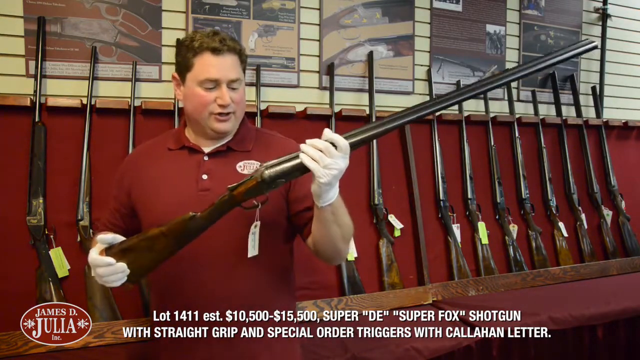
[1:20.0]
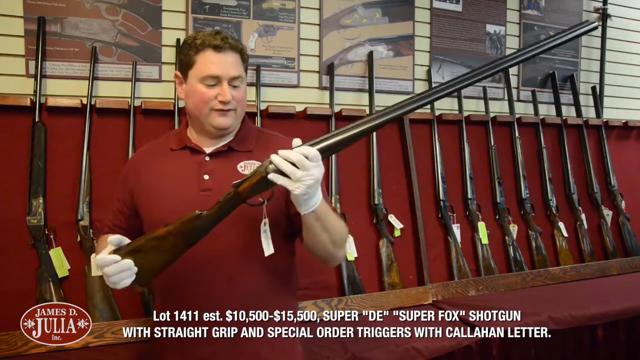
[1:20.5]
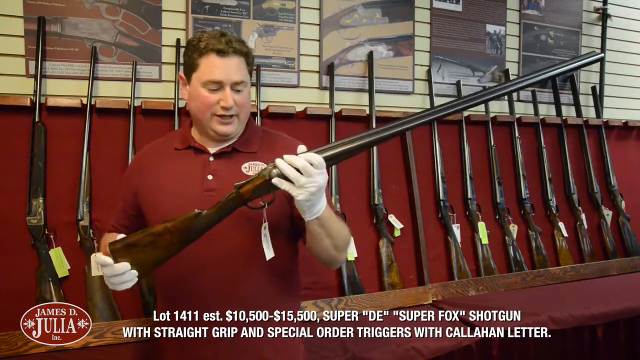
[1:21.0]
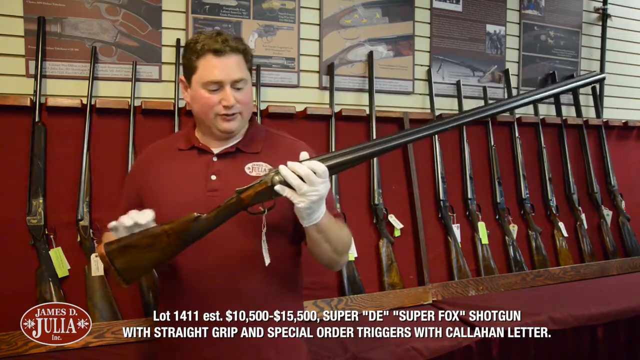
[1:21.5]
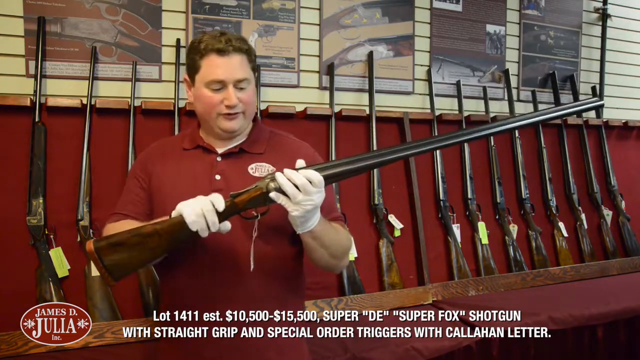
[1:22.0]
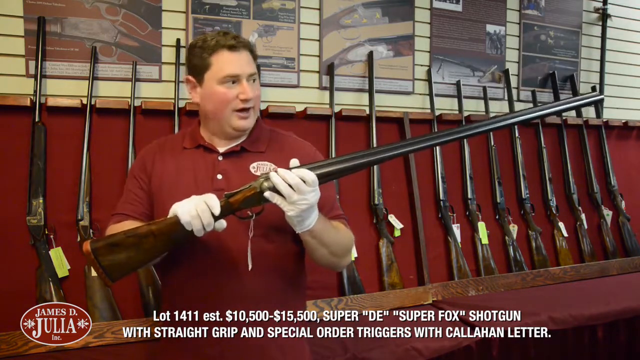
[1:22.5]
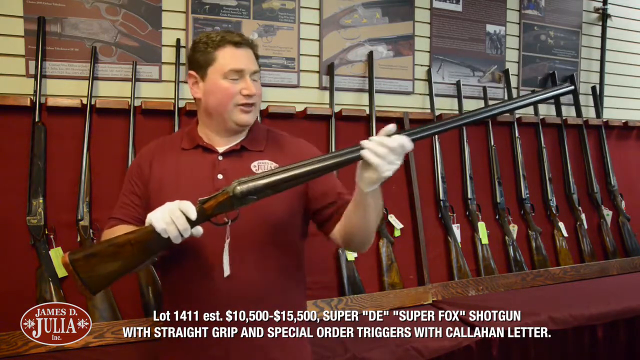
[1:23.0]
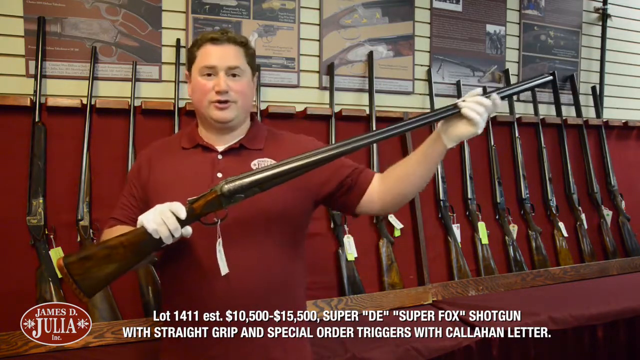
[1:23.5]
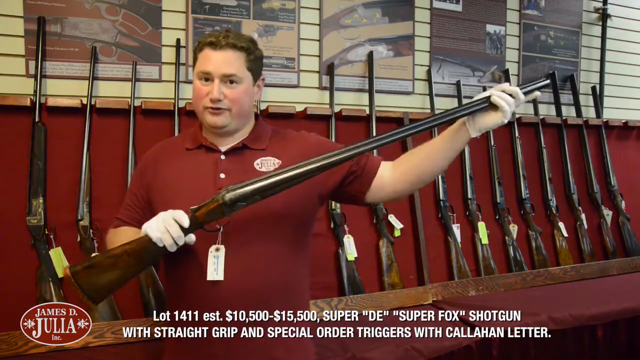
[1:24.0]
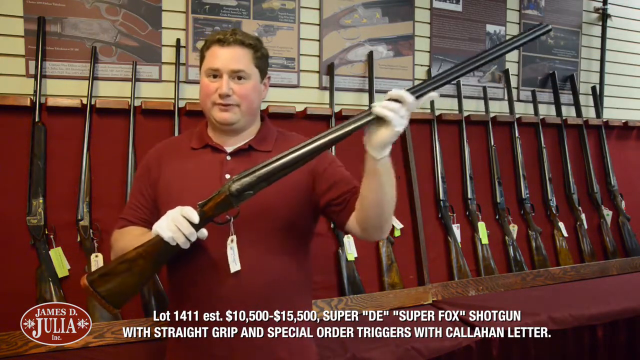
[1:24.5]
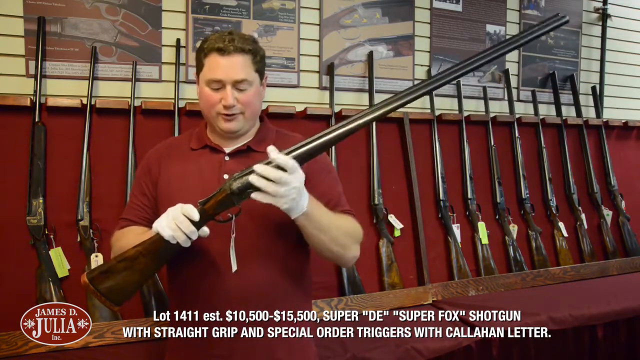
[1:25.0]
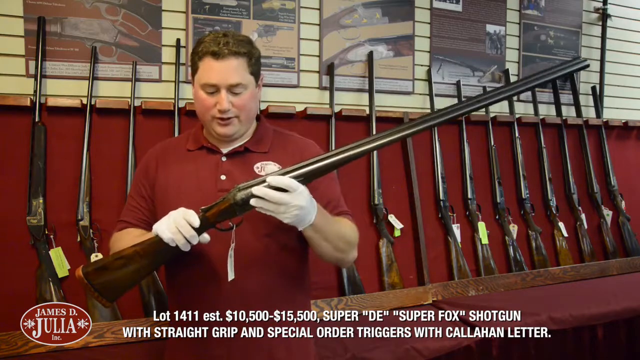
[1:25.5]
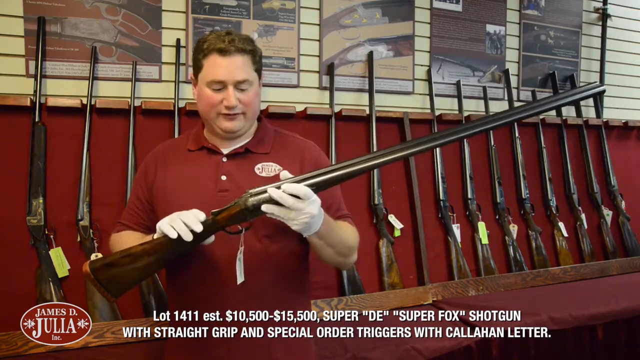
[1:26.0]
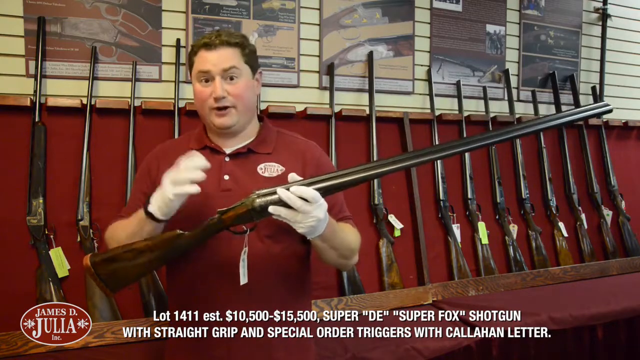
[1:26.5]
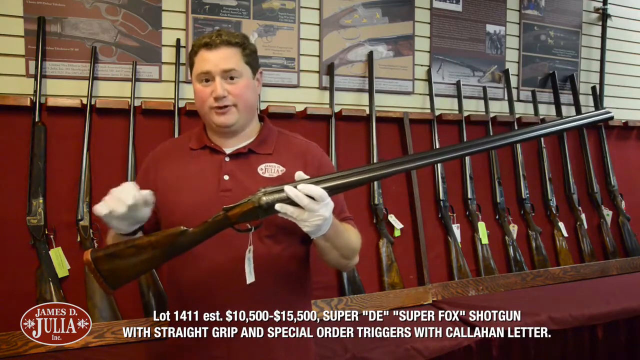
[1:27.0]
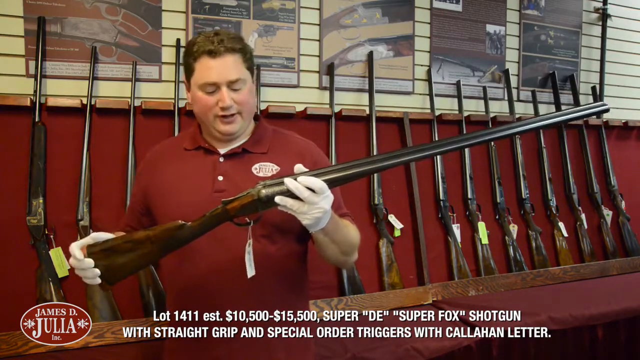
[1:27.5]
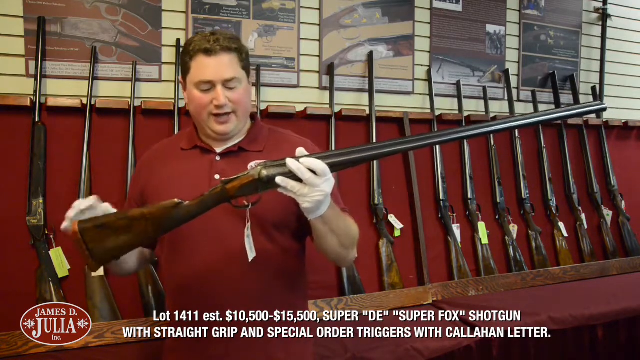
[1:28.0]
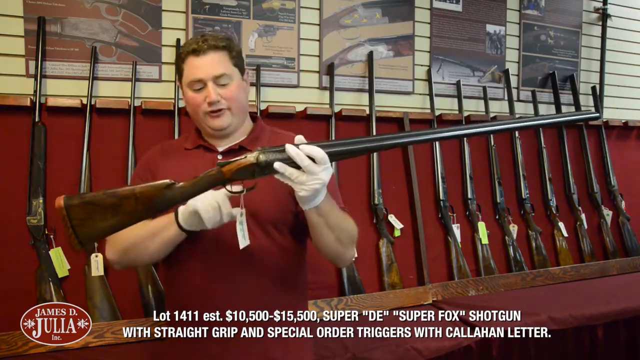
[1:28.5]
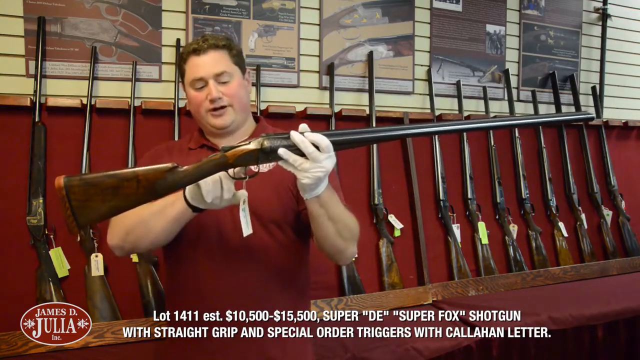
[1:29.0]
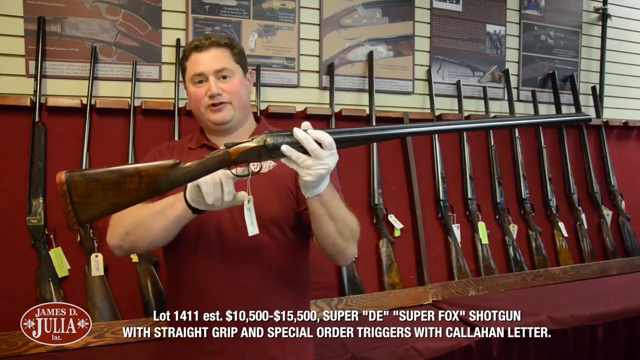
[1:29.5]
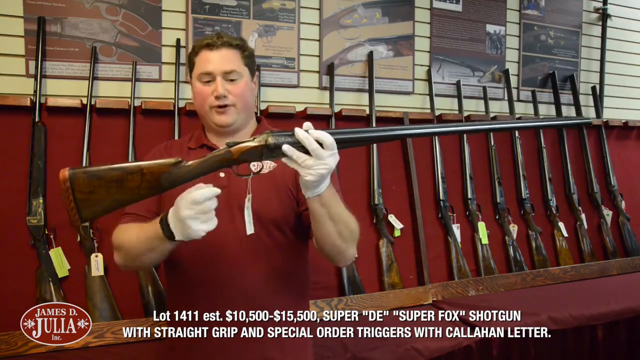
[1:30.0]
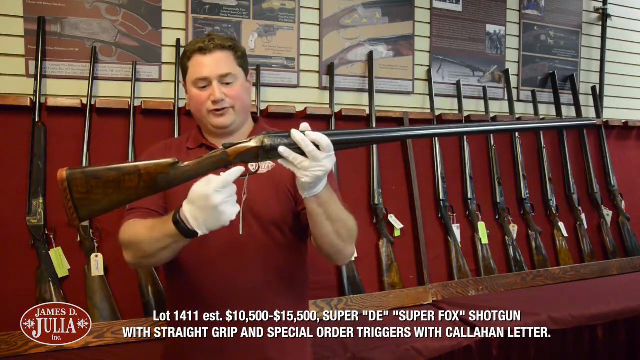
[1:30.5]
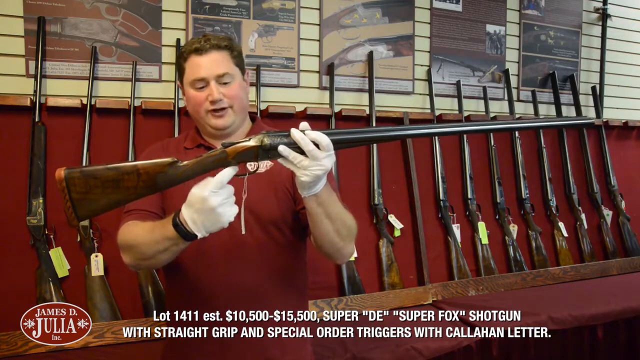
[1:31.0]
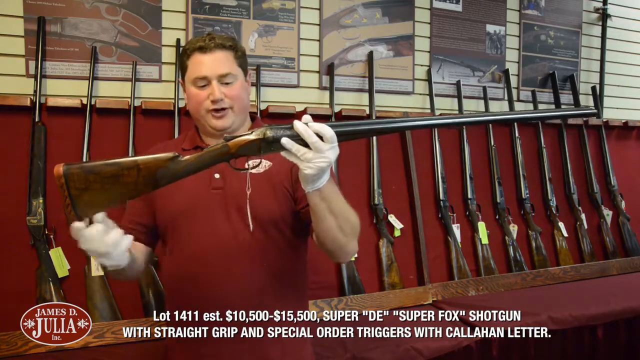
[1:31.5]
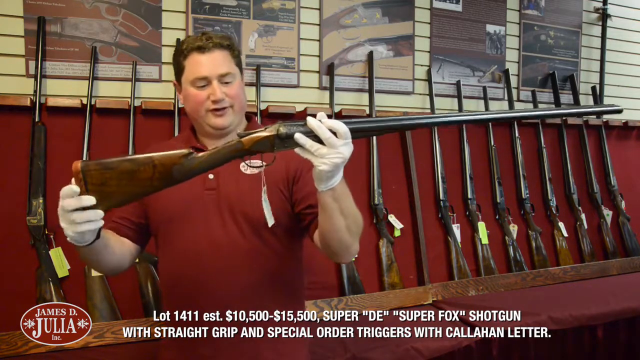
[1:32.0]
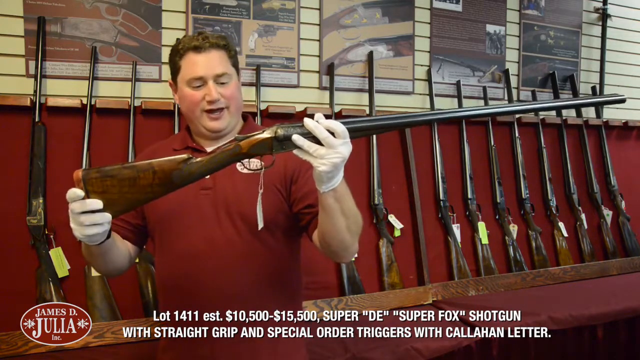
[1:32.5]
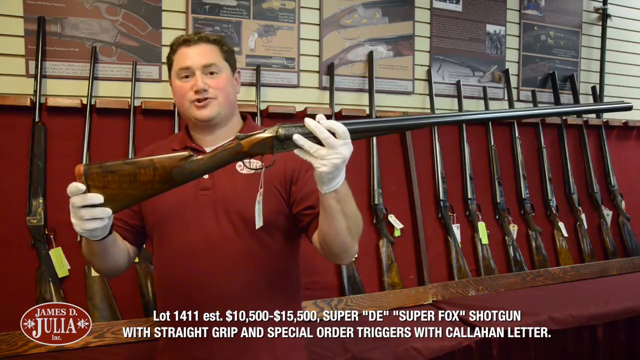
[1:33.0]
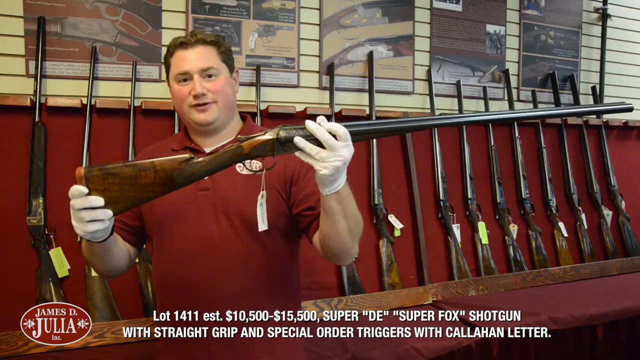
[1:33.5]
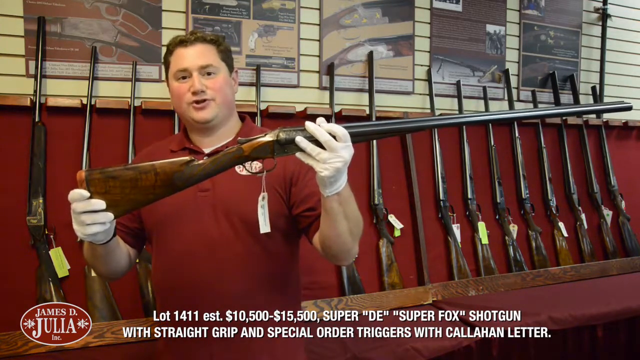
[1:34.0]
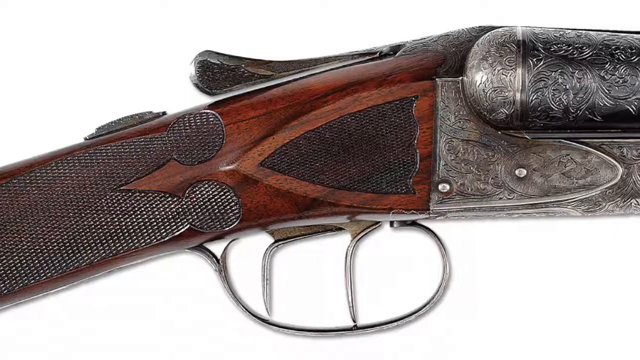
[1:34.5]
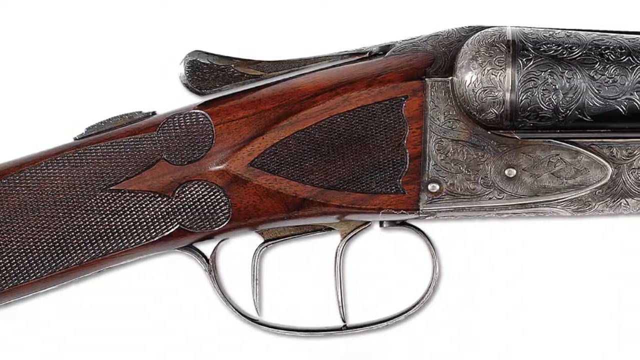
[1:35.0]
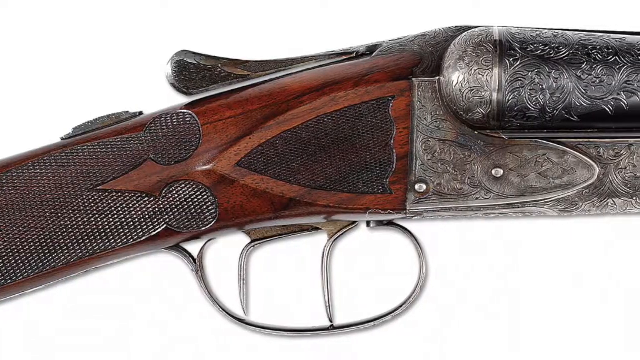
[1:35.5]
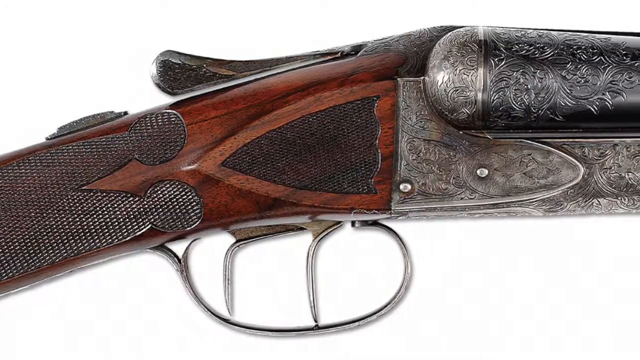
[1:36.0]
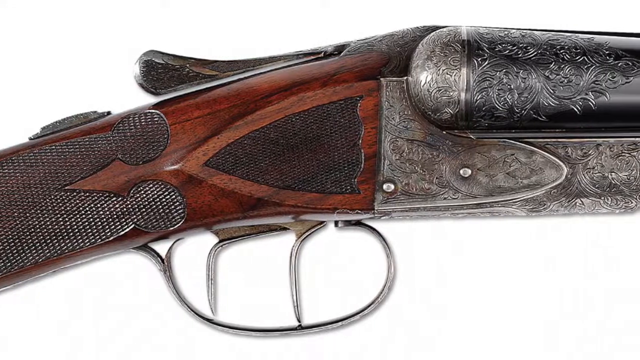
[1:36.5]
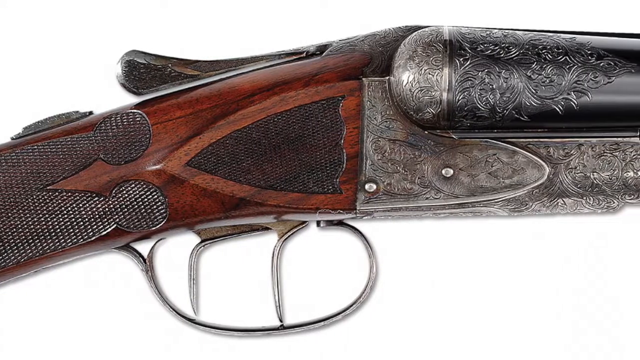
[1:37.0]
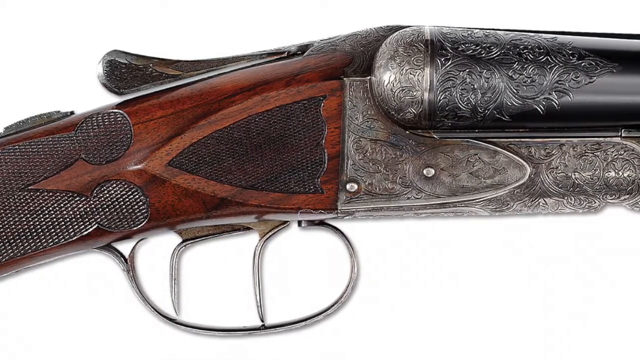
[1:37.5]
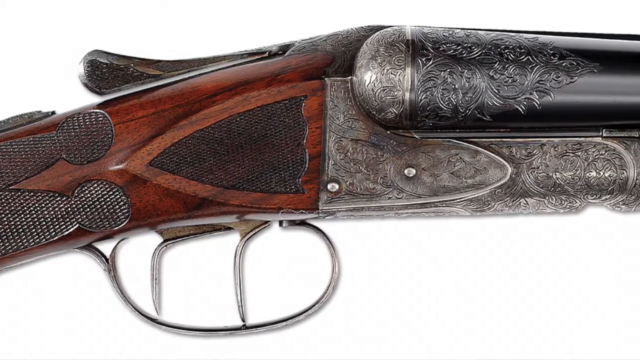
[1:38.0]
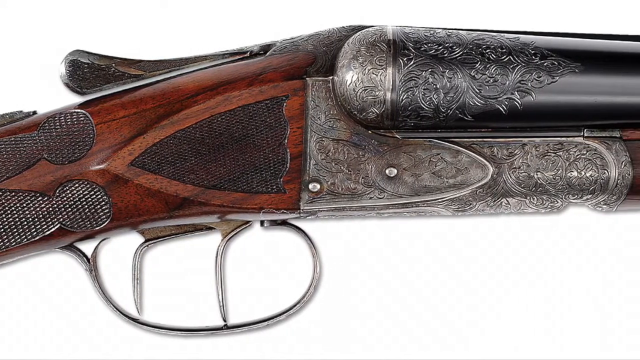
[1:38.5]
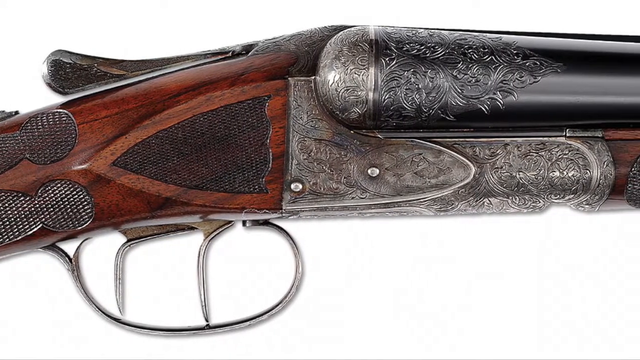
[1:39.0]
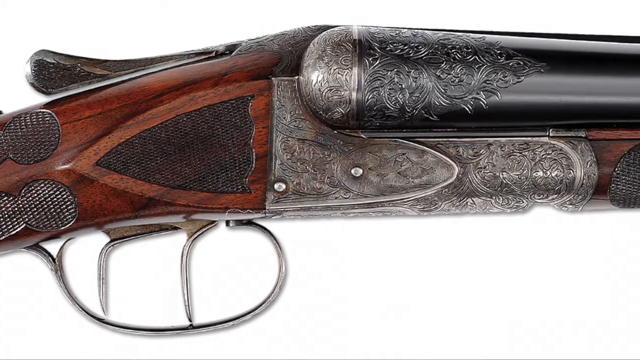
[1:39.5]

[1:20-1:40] The man continues with the long-barreled rifle in his hands, looking down at it and speaking. He moves his right hand from the back of the gun toward the center, then moves his left hand toward the end of the barrel to point something out about the barrel, and slides that hand down the barrel back to the center of the gun. With his right hand he kind of gestures above the back of the gun as if to emphasize what he is saying. He moves his right hand to the back of the gun again, then sticks out his pointer finger and points to the trigger. He seems to lift the rifle a little higher with his left hand, then puts his right hand under the gun, pointing toward the trigger once more, this time around and under from the front side.